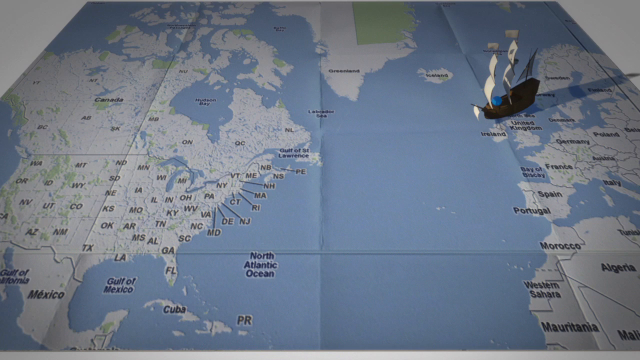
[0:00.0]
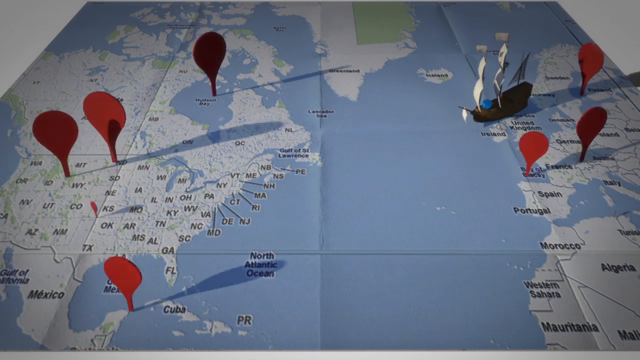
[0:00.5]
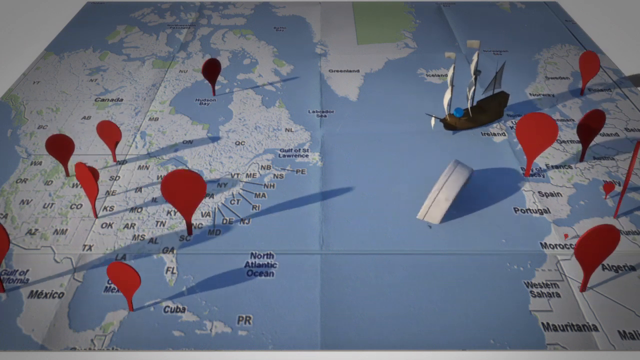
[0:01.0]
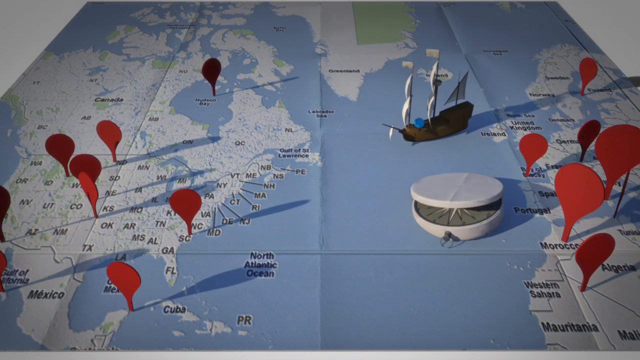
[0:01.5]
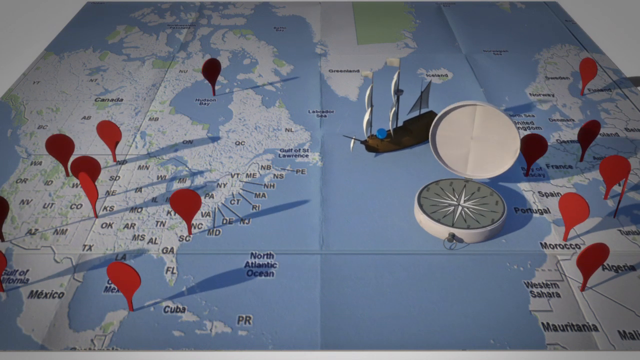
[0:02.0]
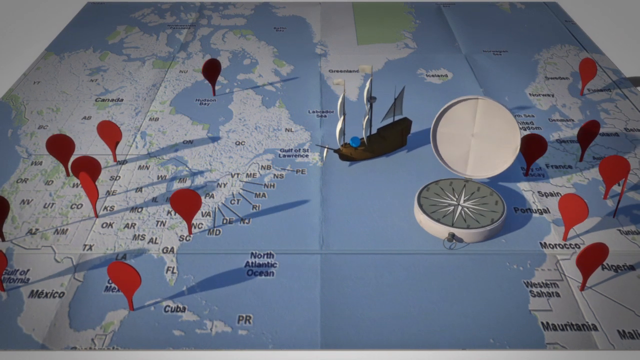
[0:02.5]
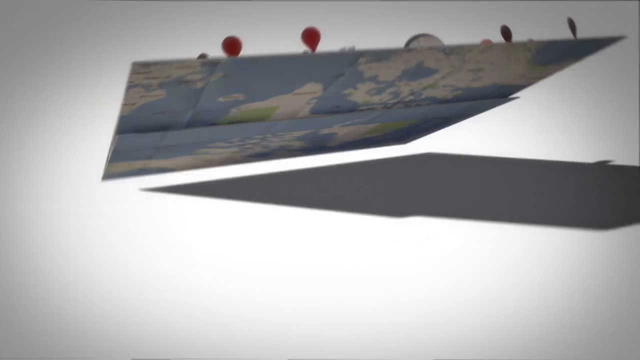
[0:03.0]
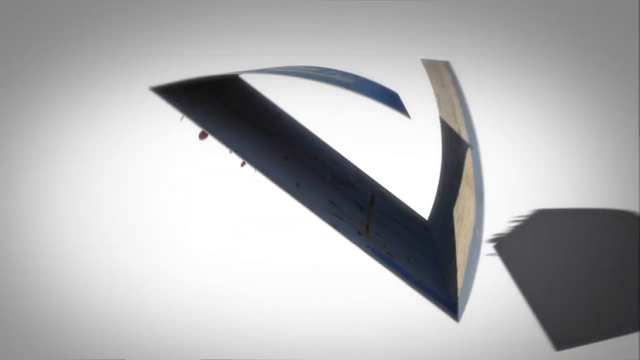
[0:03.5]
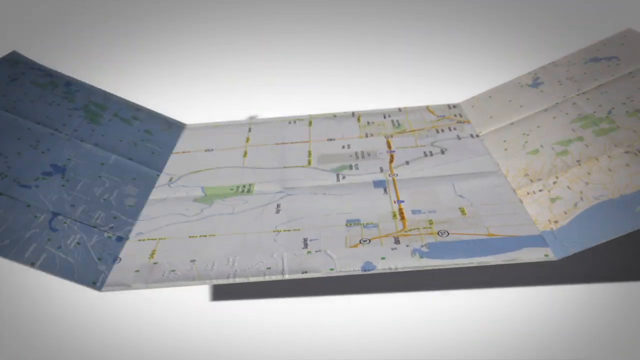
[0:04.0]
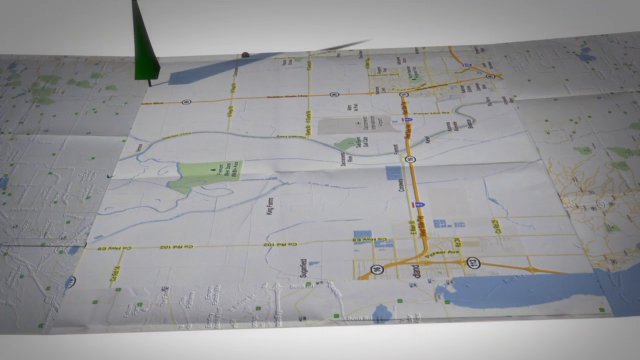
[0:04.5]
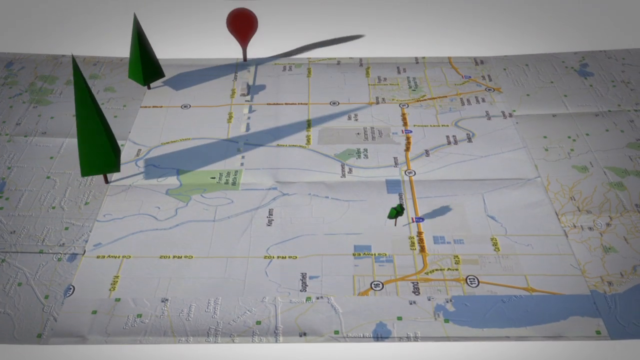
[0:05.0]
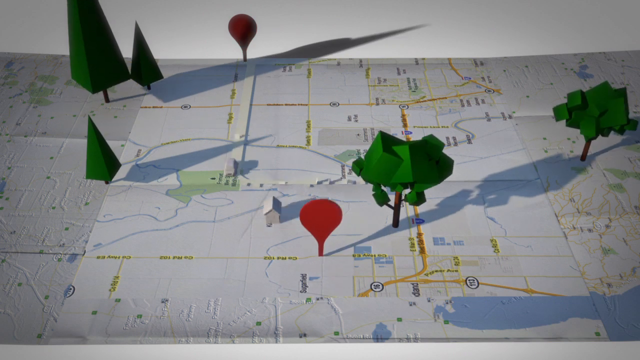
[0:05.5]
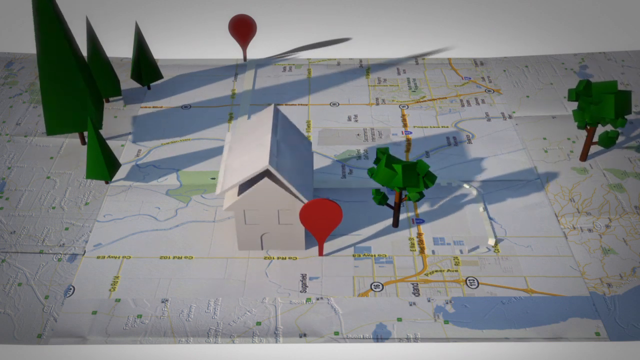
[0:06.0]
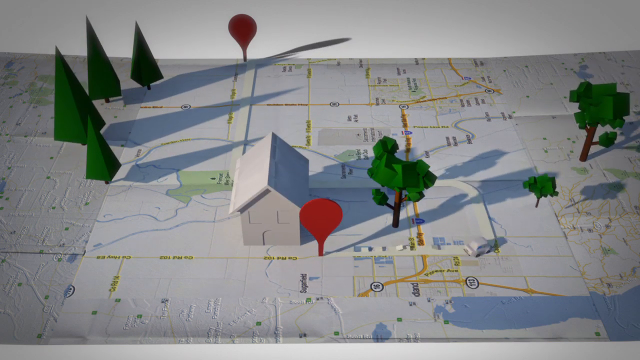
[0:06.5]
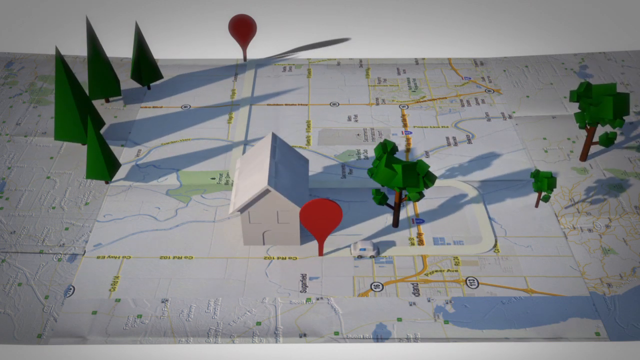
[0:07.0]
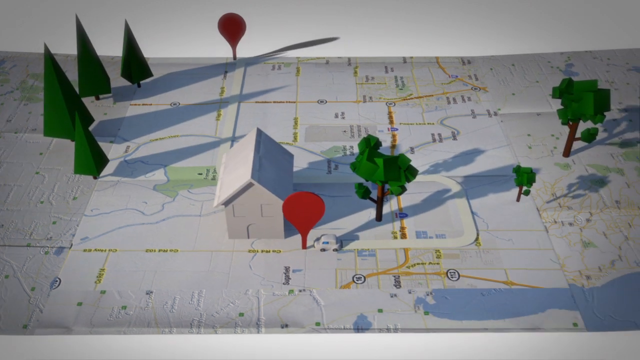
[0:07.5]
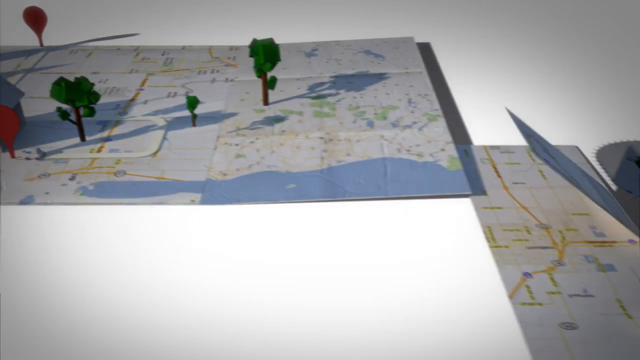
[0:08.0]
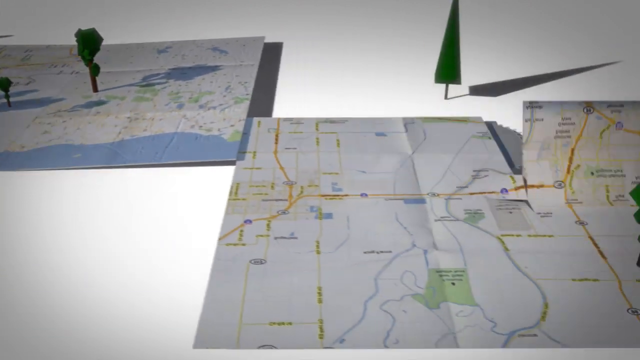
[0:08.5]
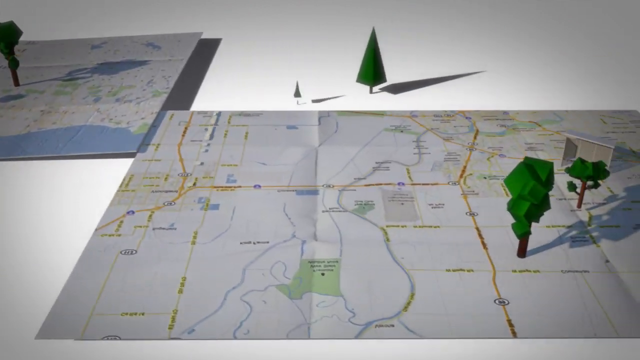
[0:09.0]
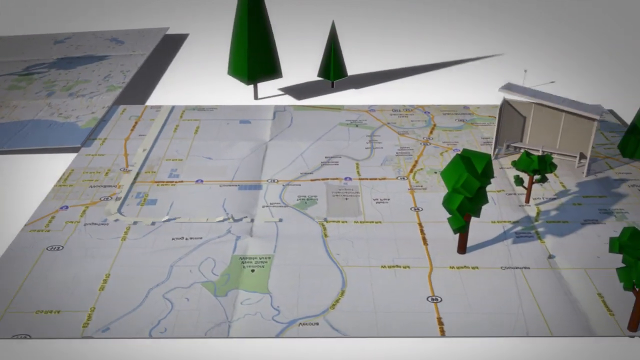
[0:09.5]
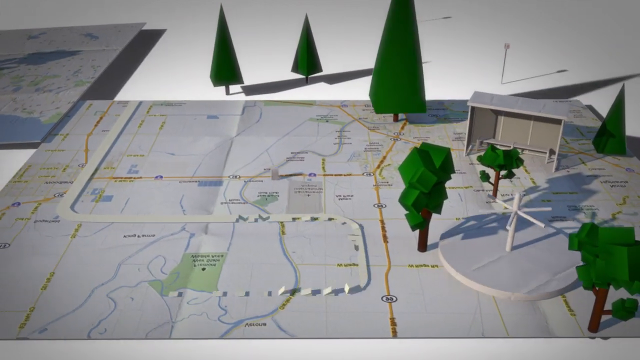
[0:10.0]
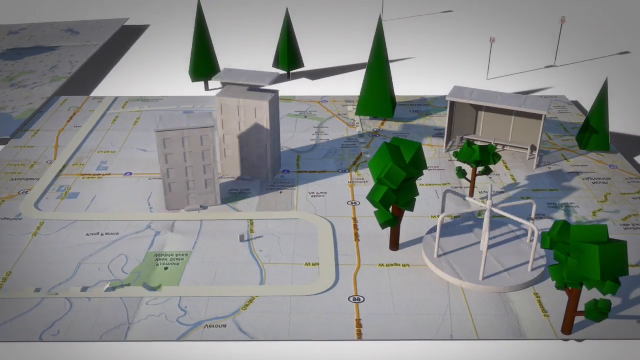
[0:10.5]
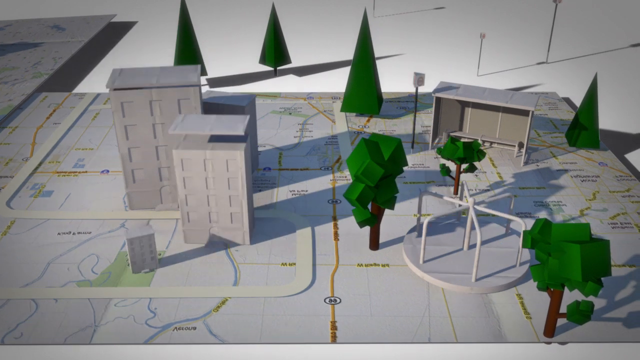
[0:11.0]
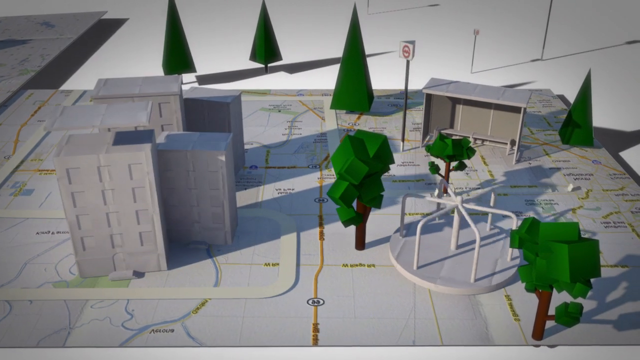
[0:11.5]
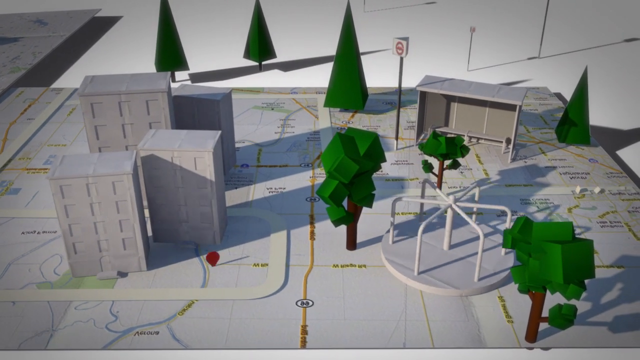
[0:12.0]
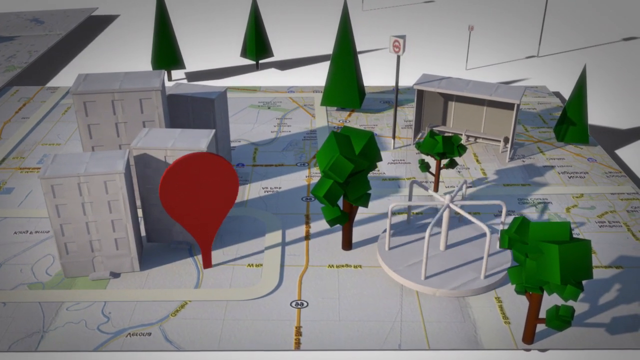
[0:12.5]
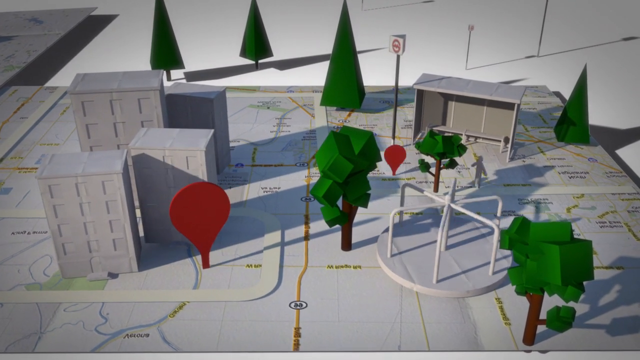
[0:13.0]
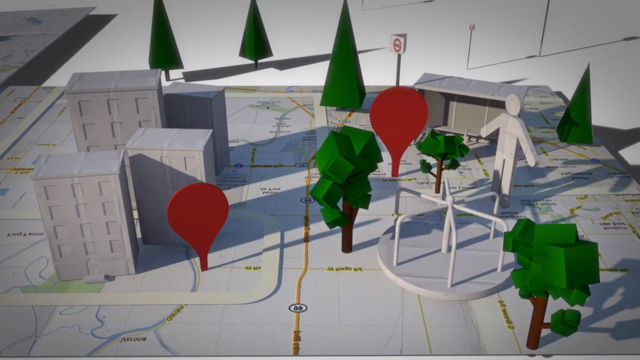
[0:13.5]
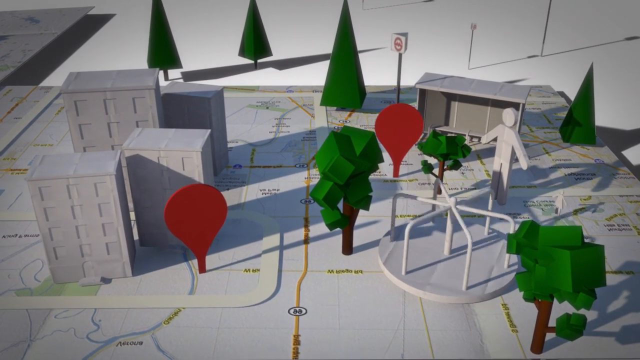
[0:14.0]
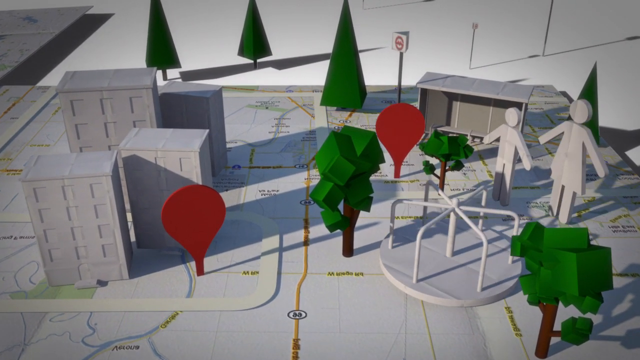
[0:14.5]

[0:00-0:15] A map unfolds, and a little boat slides across it in the ocean. At the beginning there is a compass in the middle of the ocean. Various buildings pop up, along with trees, what looks like a playground, and people. Little markers at various points on the map pin several different locations. The structure on the playground spins in a circle, and various little cars run across the map. Everything is done in 3D graphics.